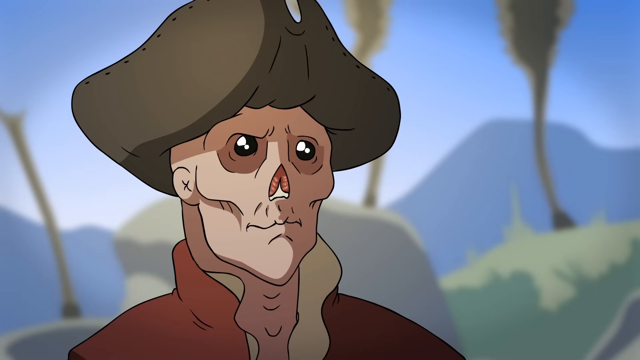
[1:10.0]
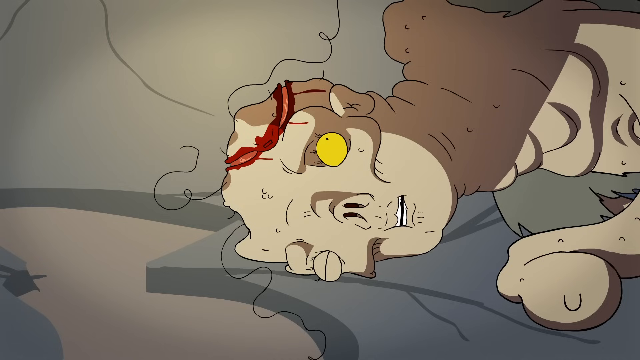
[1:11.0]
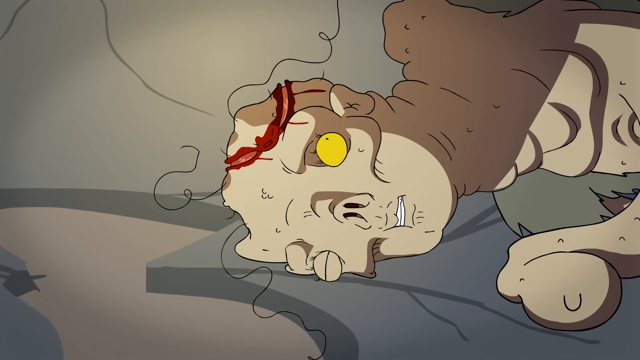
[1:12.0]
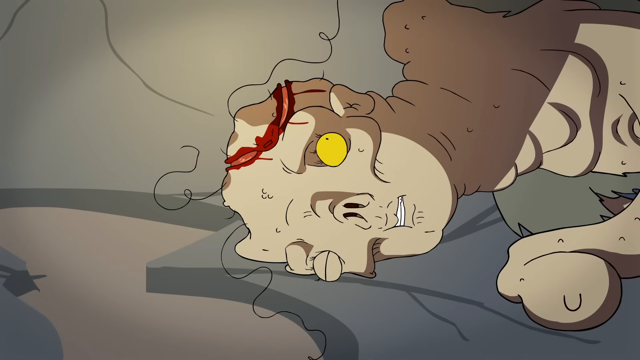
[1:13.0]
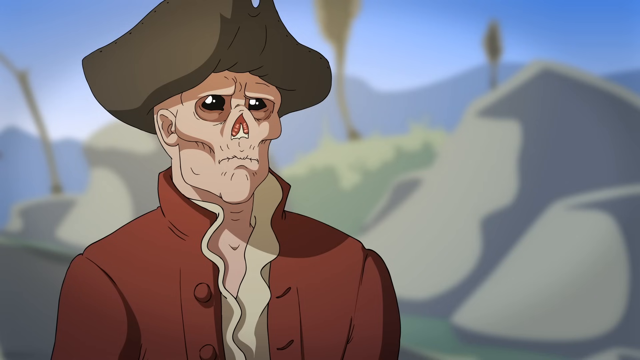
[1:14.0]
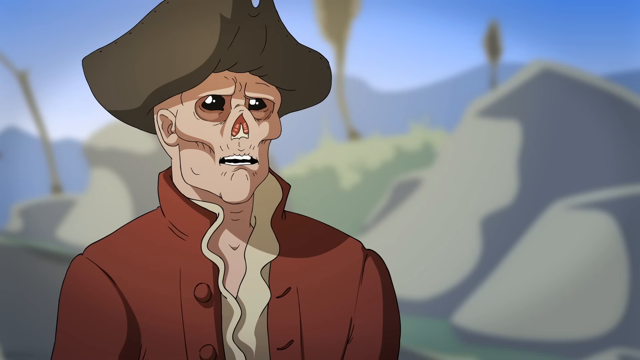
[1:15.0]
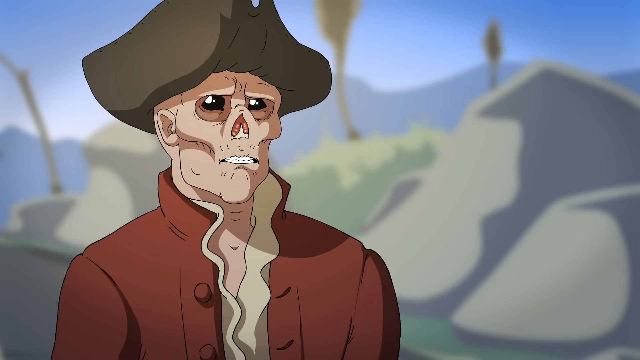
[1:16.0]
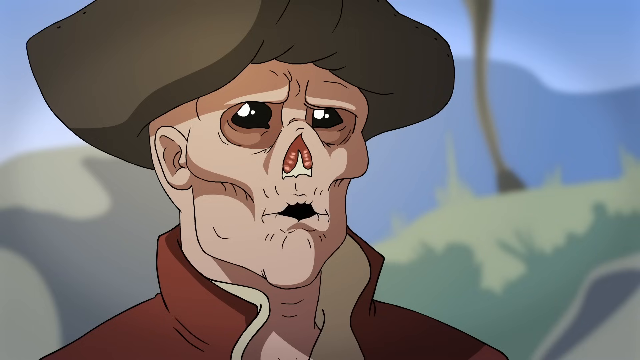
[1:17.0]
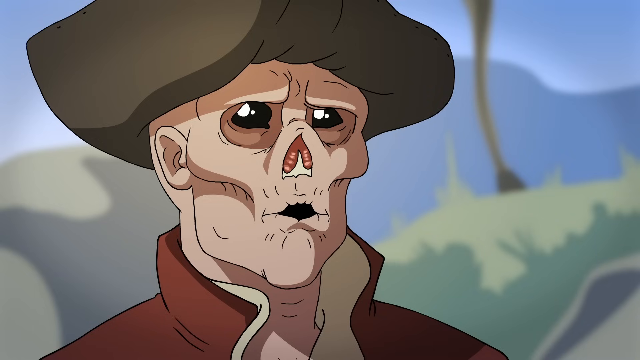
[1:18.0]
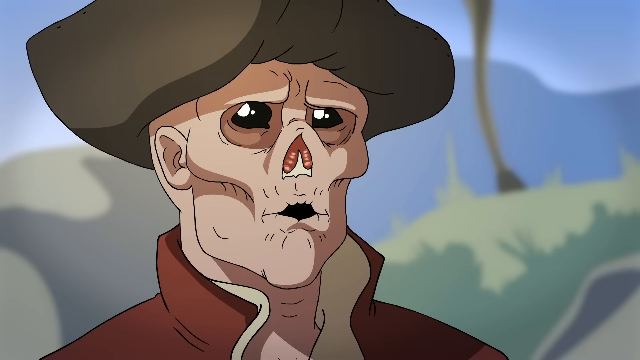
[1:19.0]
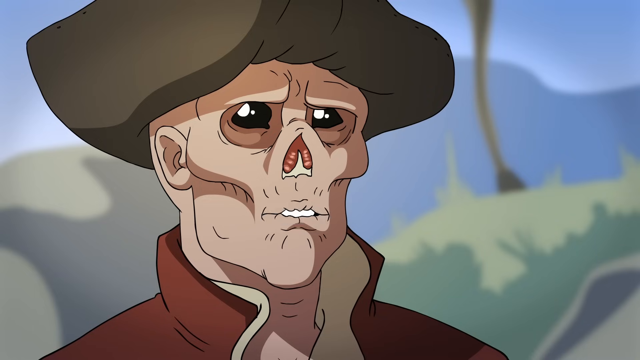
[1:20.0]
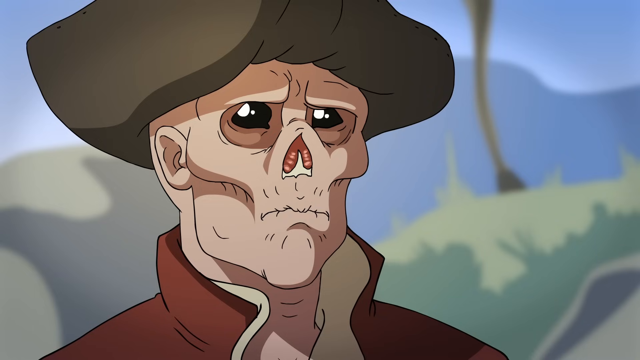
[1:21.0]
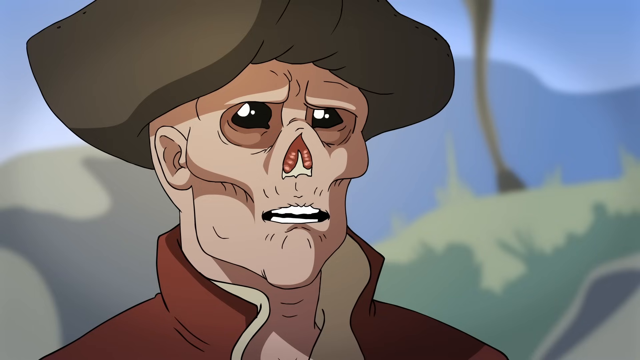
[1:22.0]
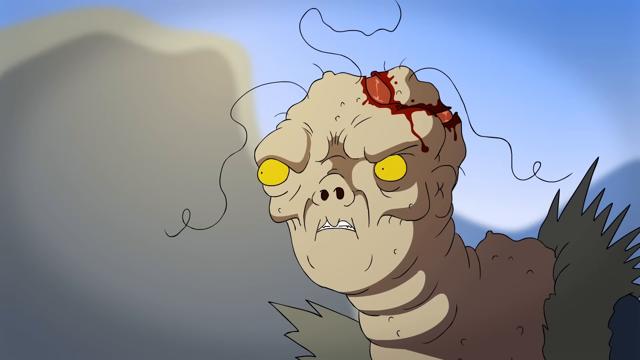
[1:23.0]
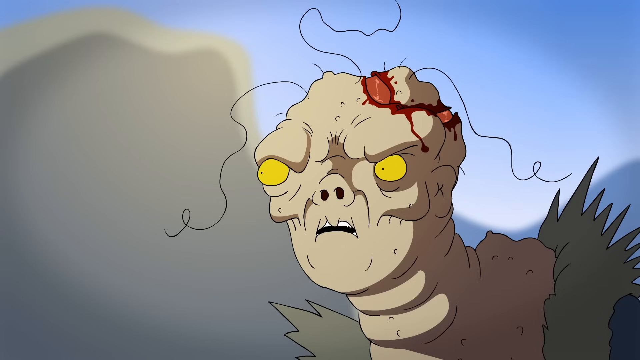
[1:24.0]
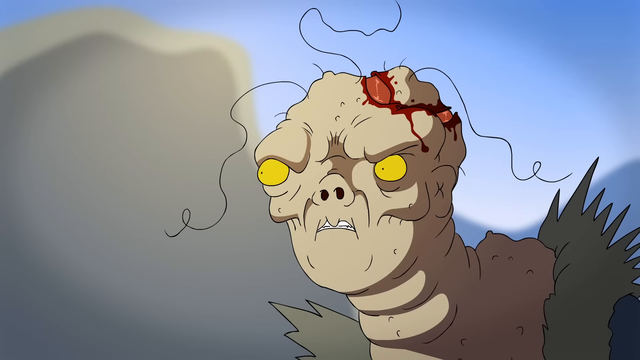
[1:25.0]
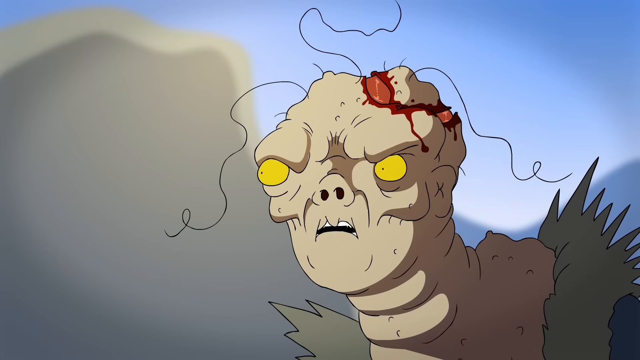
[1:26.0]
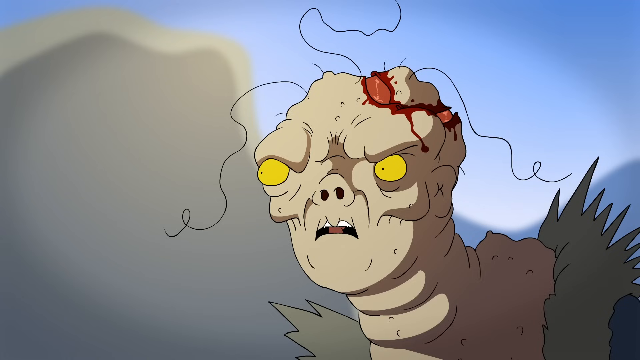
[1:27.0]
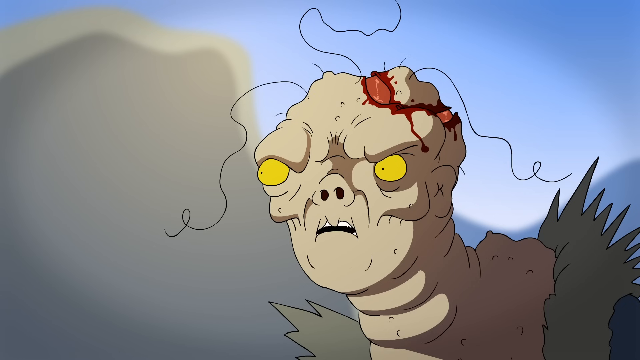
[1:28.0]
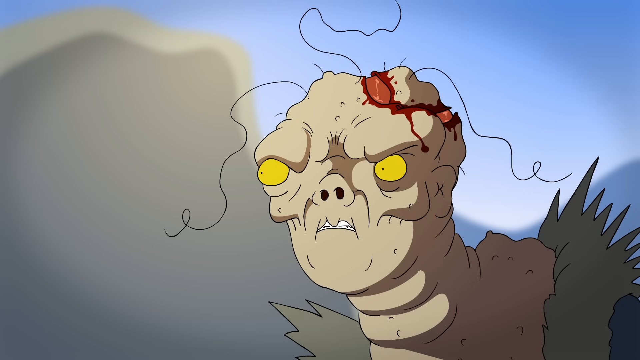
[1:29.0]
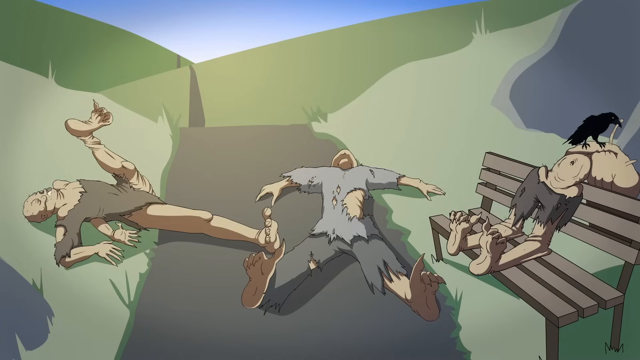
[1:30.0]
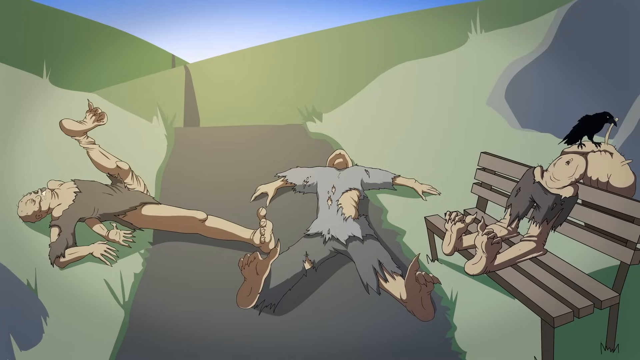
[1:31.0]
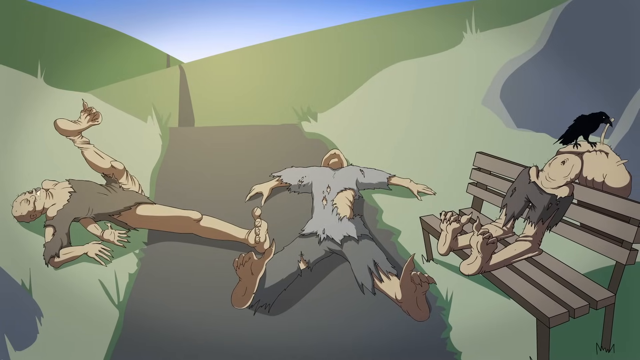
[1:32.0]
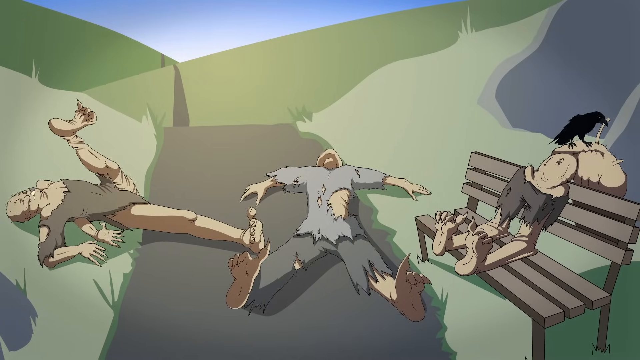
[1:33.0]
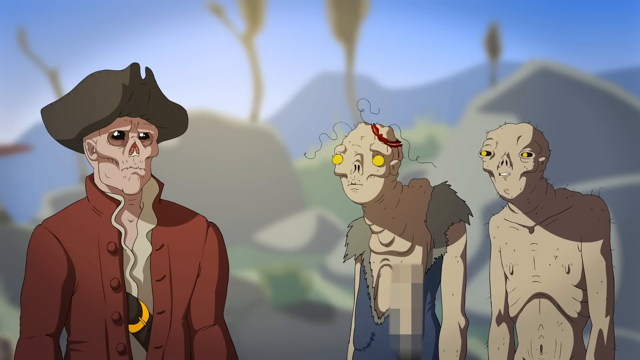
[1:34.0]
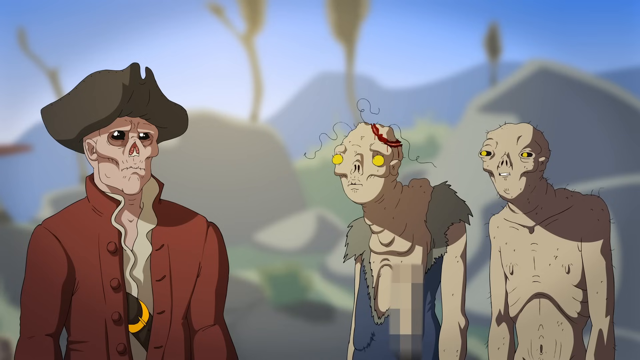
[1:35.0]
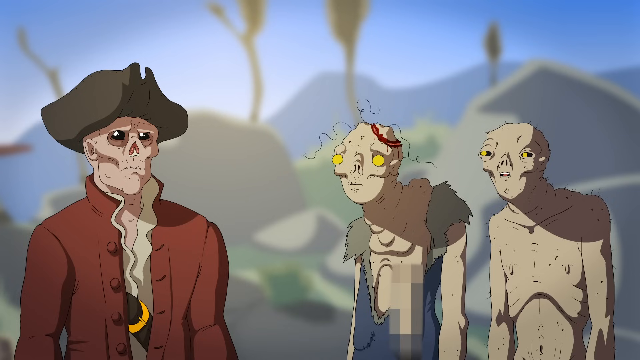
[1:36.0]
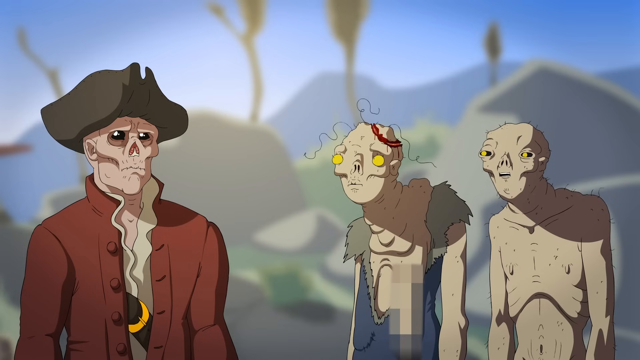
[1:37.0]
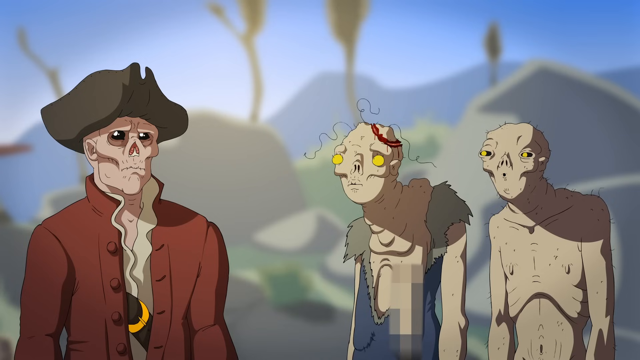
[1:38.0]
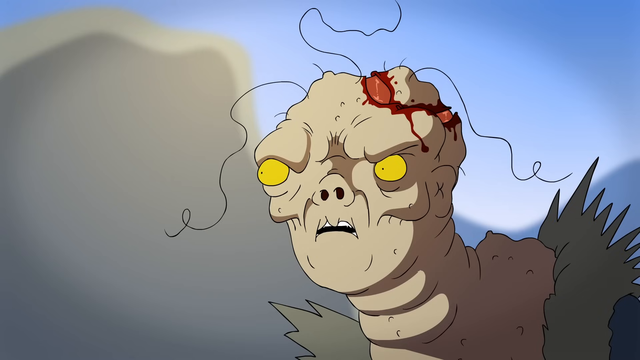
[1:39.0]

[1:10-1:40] The zombie woman in the dress lies on the ground on the right side of her face. Her right eye is yellow, and she looks upward at the man standing above her. The pirate man stands talking; his teeth show when he talks, he doesn't appear to really have lips, his cheeks are quite sunken, and the shape of his skull is visible under his skin. The camera is zoomed in on his face as he talks. The zombie woman is back on her feet, standing, with both eyes open; both are yellow, and each pupil is a tiny black dot. Three zombie creatures are shown: one is sprawled on the ground on the left, its right leg at a very odd angle and its left arm folded underneath its body; another lies spread-eagle on the path with its feet toward the camera, so the view runs from its feet toward its chest and head; the third sits on a bench.